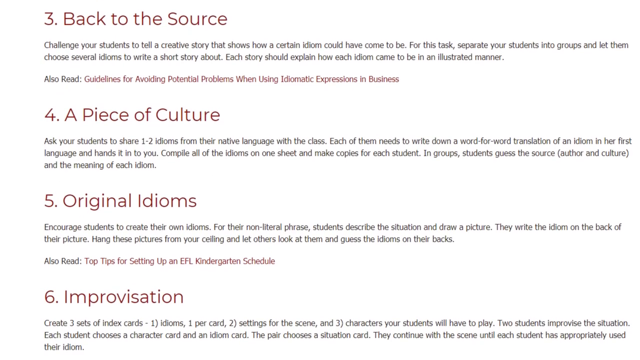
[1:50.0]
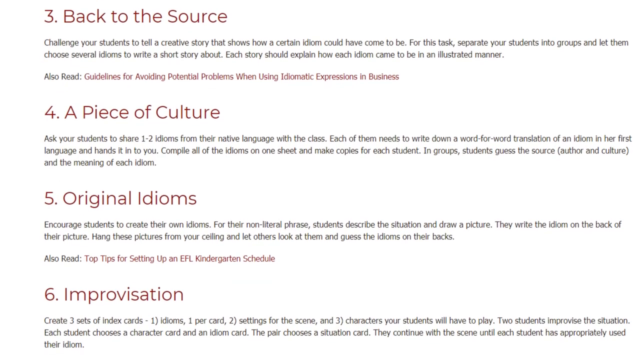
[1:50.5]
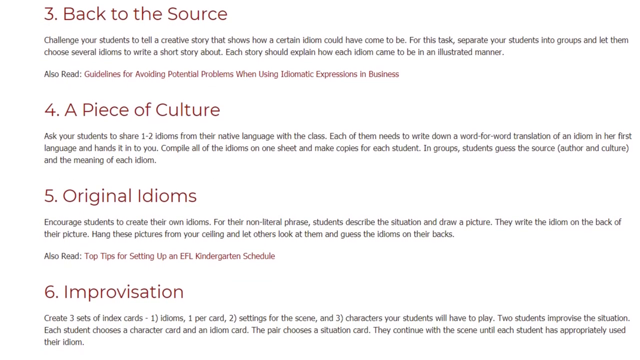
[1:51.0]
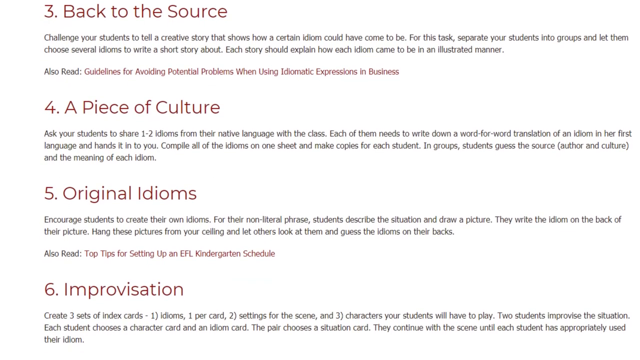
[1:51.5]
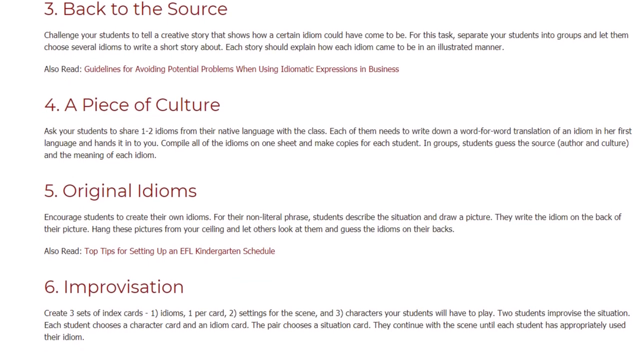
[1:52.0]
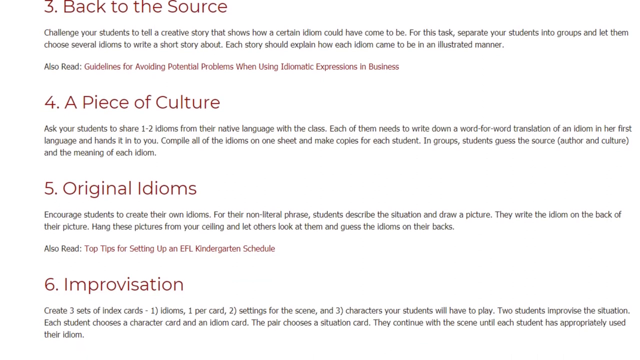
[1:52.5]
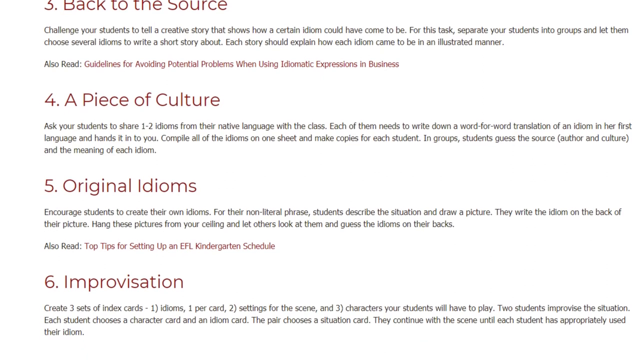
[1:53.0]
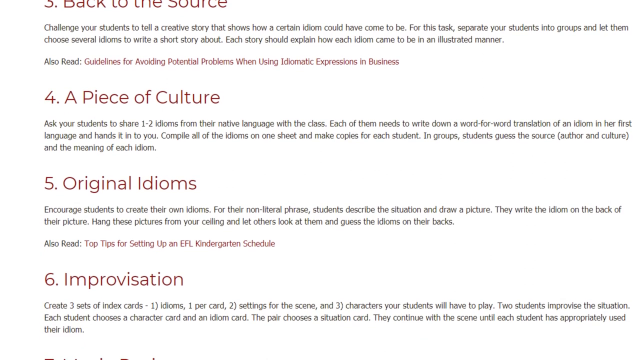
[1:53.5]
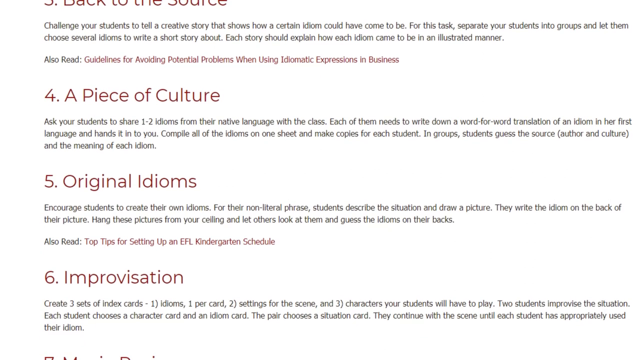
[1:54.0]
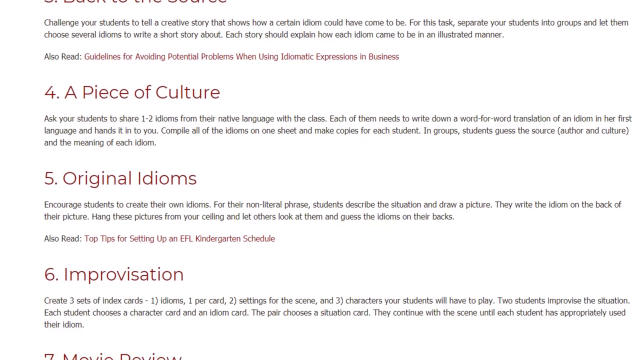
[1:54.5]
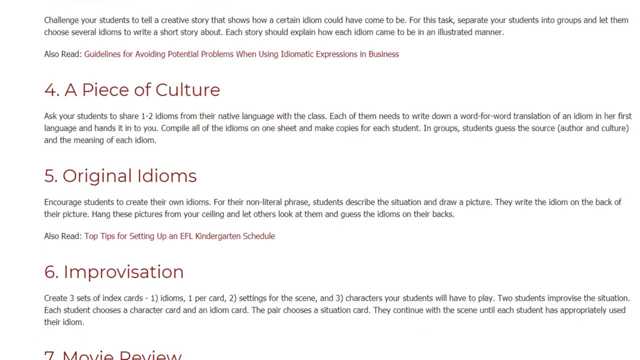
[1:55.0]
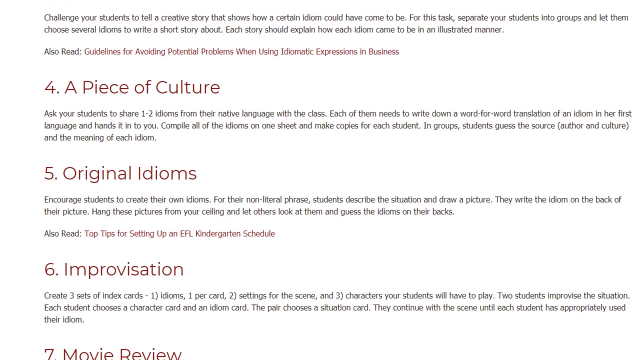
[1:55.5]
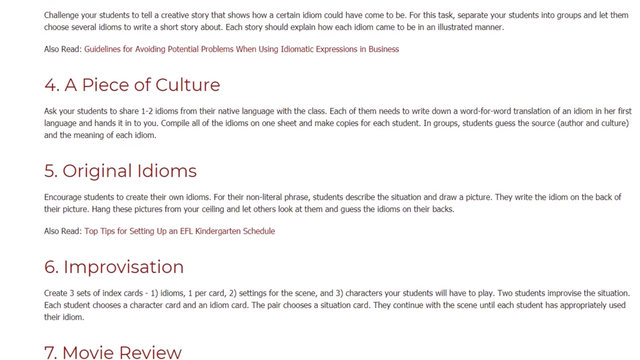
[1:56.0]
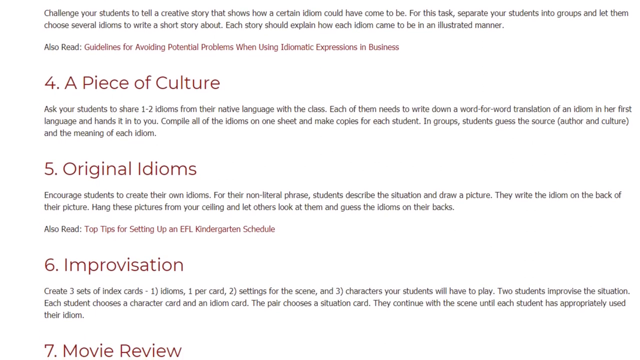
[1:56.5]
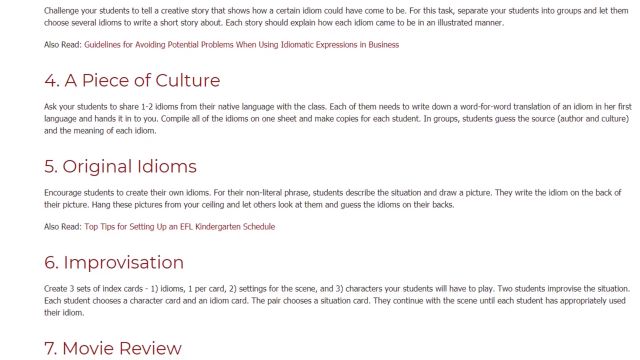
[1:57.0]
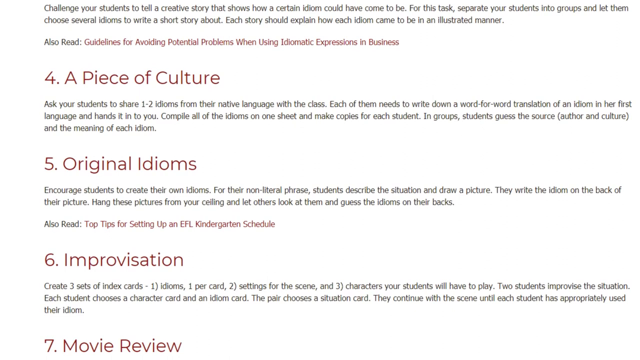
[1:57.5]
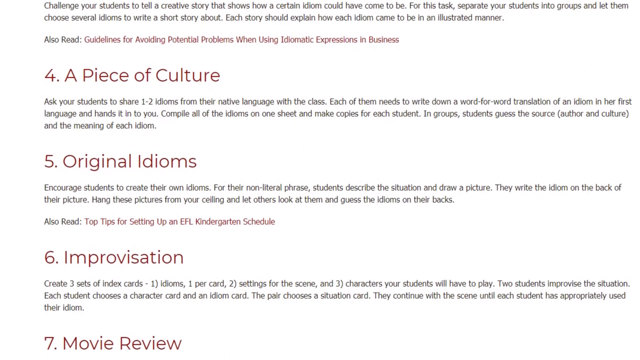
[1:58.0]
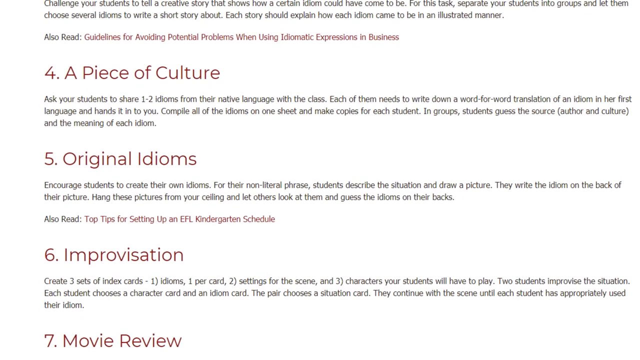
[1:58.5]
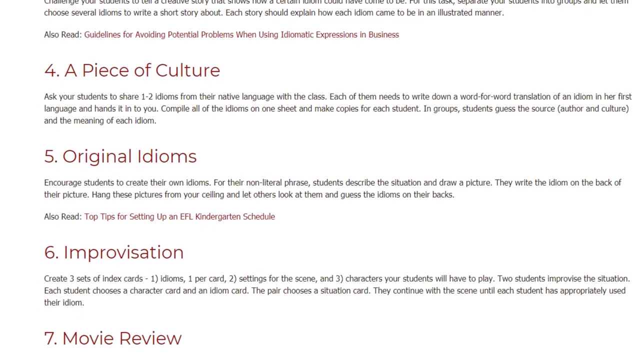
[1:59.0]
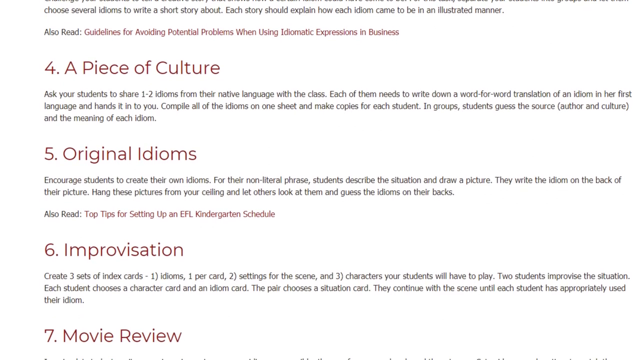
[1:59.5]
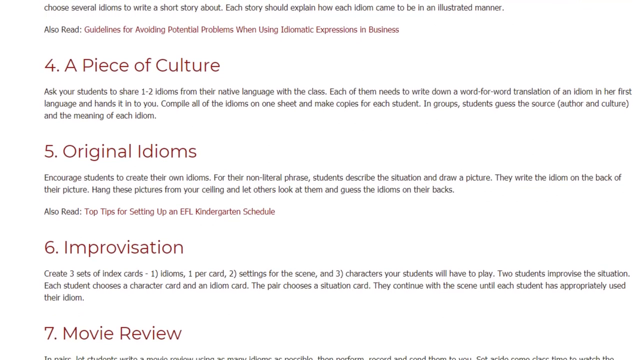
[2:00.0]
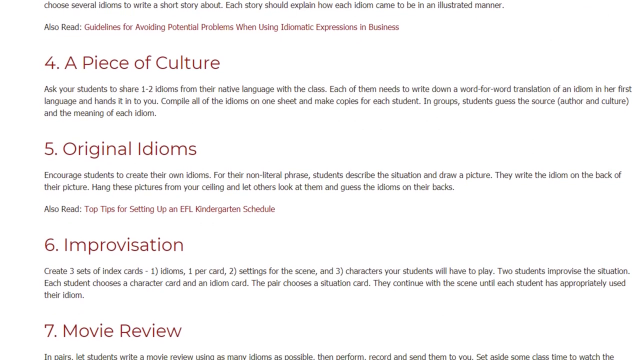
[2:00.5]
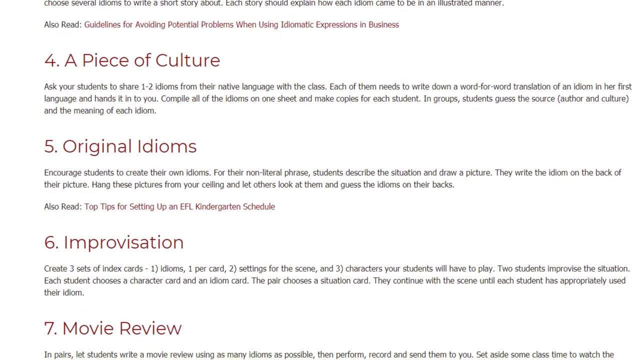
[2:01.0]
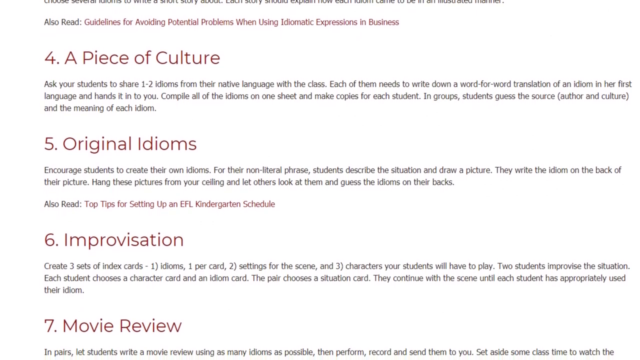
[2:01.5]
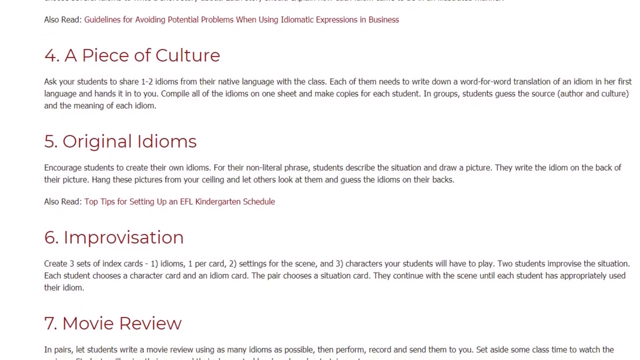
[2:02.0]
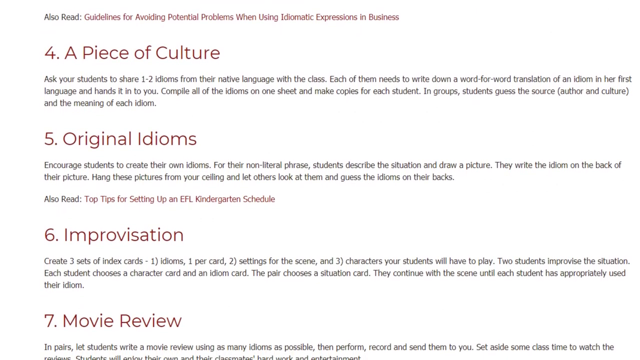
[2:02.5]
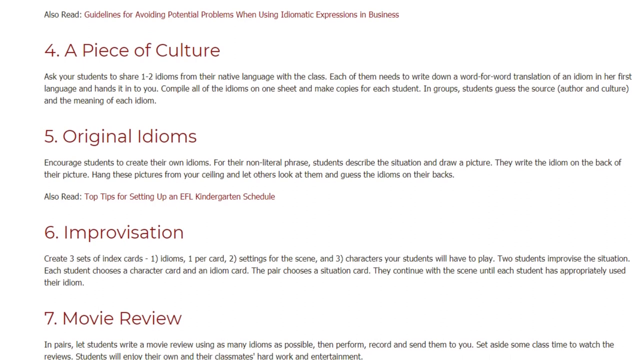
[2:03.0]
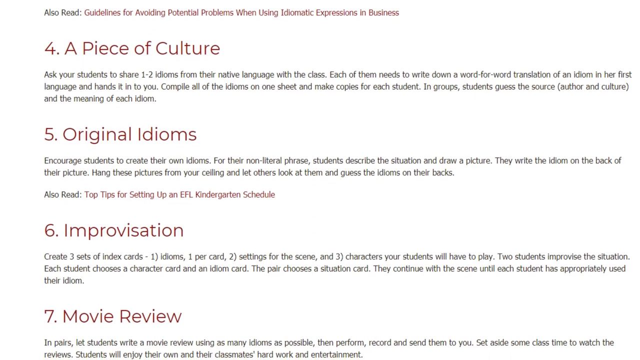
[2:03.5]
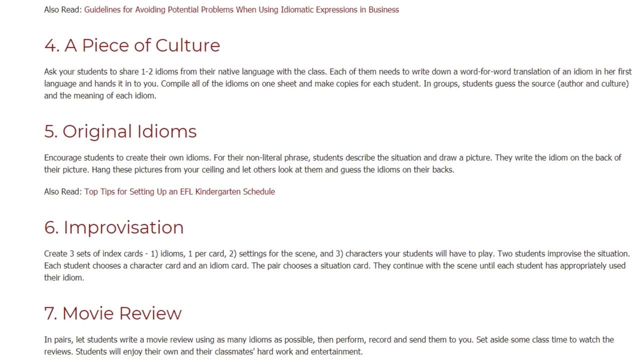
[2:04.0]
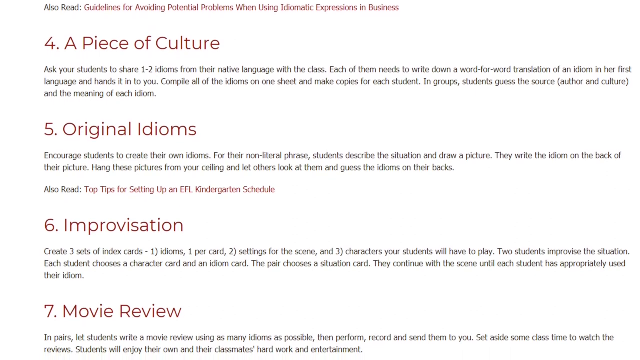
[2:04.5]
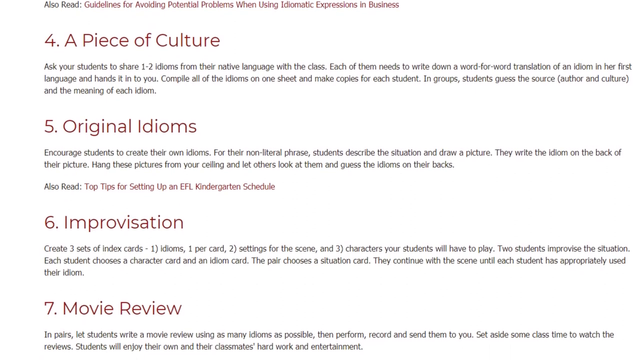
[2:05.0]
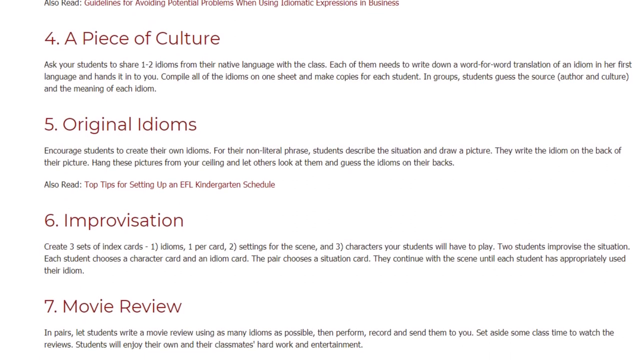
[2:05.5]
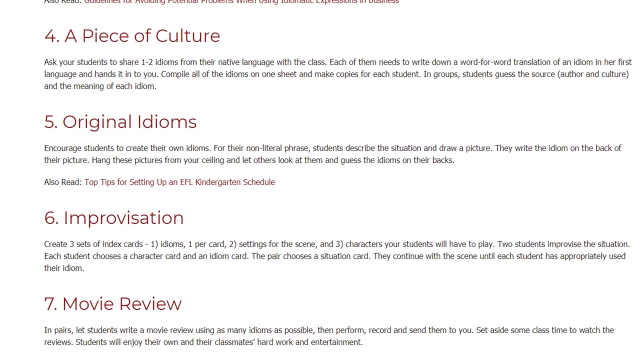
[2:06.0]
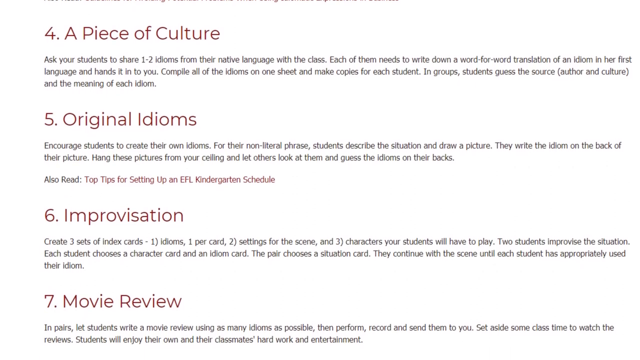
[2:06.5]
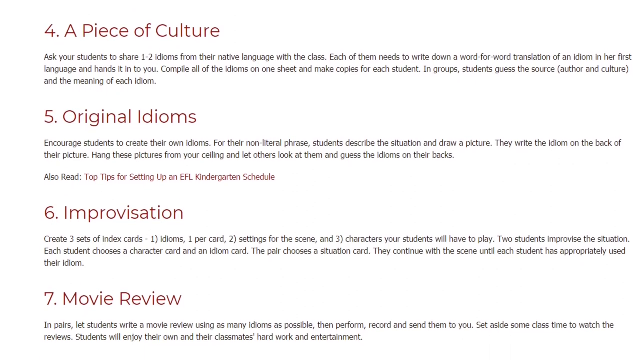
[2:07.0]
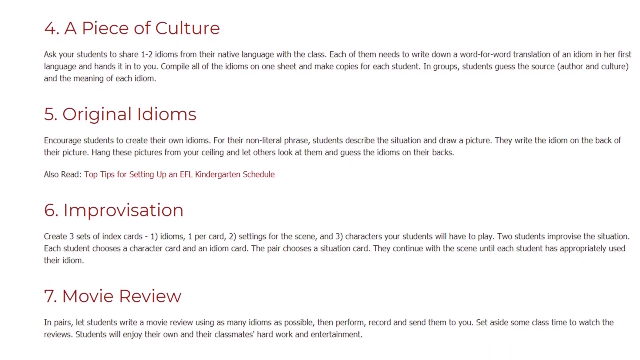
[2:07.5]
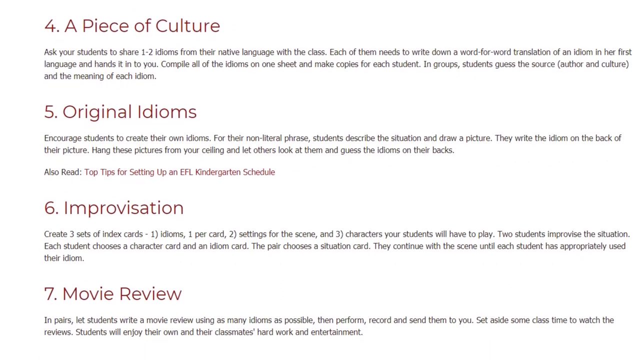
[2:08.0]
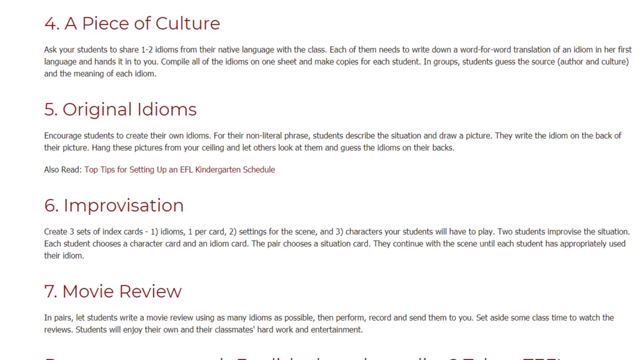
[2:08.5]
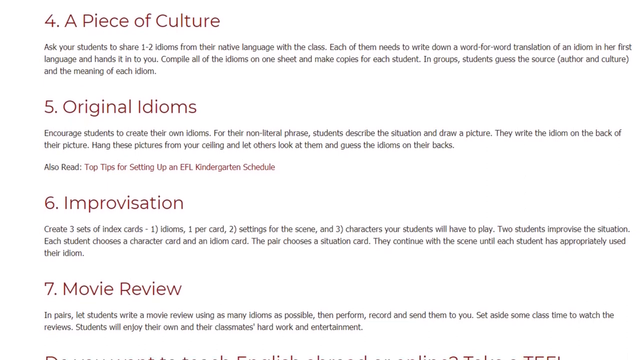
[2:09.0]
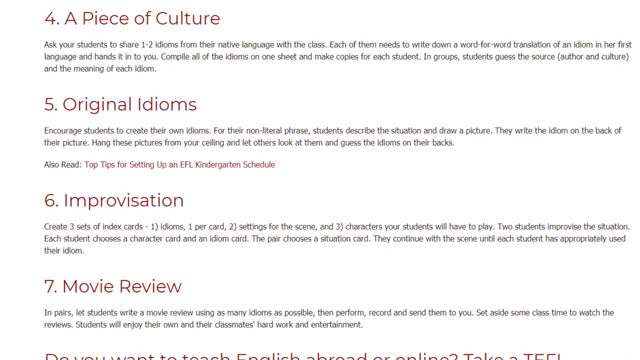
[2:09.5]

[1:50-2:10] The educational video on explaining idioms to students from a different language starts here with strategy number three, "back to the source," described below as: "Challenge your students to tell a creative story that shows how a certain idiom could have come to be. For this task separate your students into groups and let them choose several idioms to write a short story about. Each story should explain how each idiom came to be in an illustrated manner." The fourth strategy, "a piece of culture," says: "Ask your students to share one to two idioms from their native language with the class. Each of them needs to write down a word for word translation of an idiom in their first language and hands it to you. Compile all the idioms in one sheet and make copies for each student. In groups students guess the source author and culture and the meaning of each idiom." The video scrolls a little further down the page to strategy number five, "original idioms": "Encourage students to create their own idioms for their non-literal phrase. Students describe the situation, draw a picture, they write the idiom on the back of their picture. Hang these pictures from your ceiling and let others look at them and guess the idioms on their backs." The sixth strategy, "improvisation," says: "Create three sets of index cards: 1) idioms, one per card, 2) settings for the scene, and 3) characters your students will have to play. Two students improvise a situation. Each student chooses a character card and an idiom card. The pair chooses a situation card. They continue with the scene until each student has appropriately used their idiom." Strategy number 7 then appears: "Movie Review."